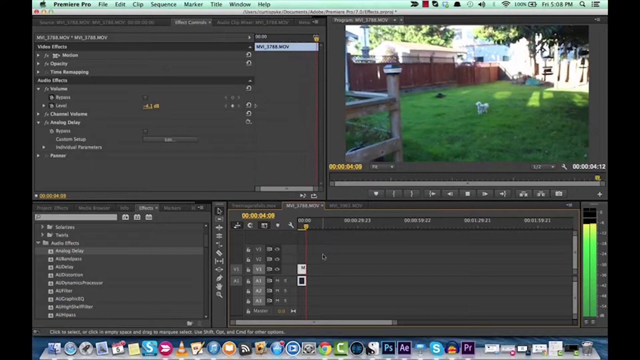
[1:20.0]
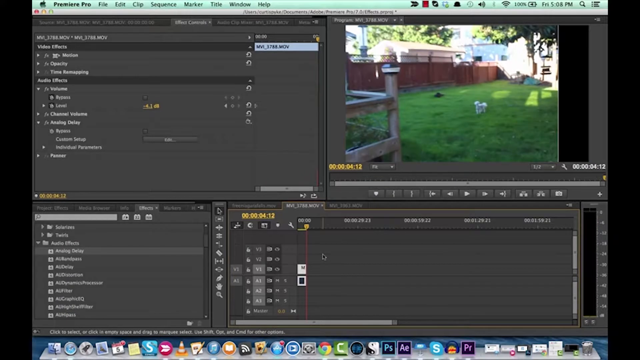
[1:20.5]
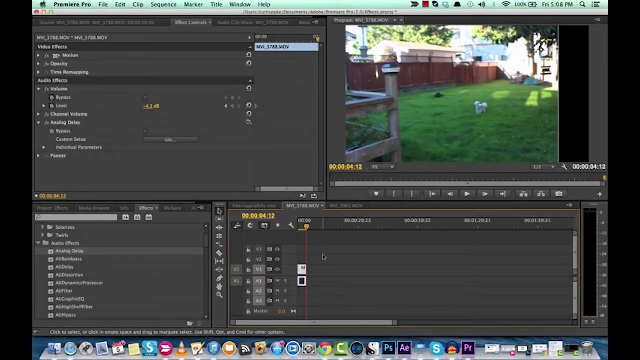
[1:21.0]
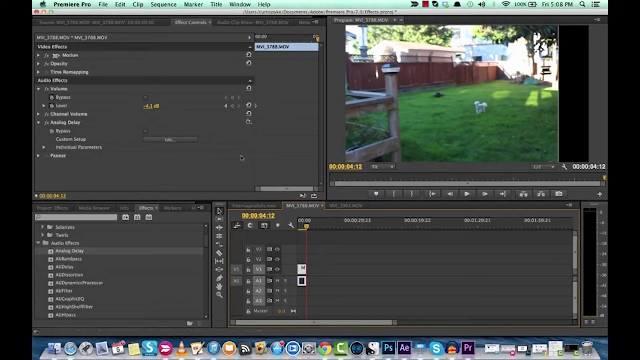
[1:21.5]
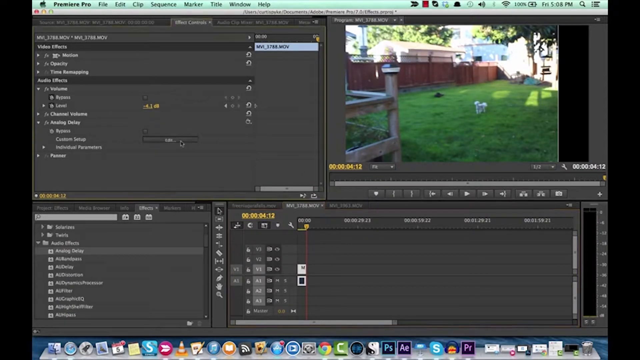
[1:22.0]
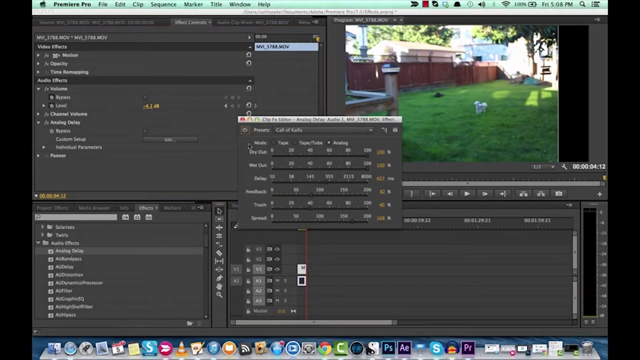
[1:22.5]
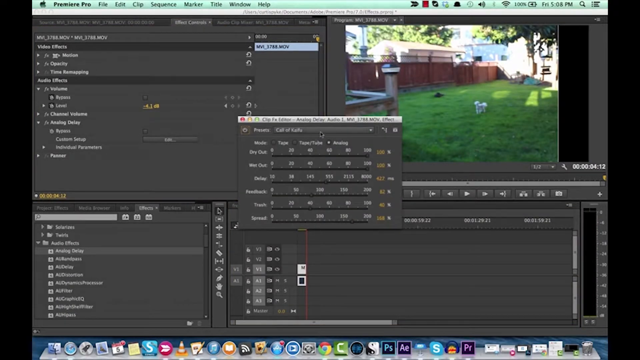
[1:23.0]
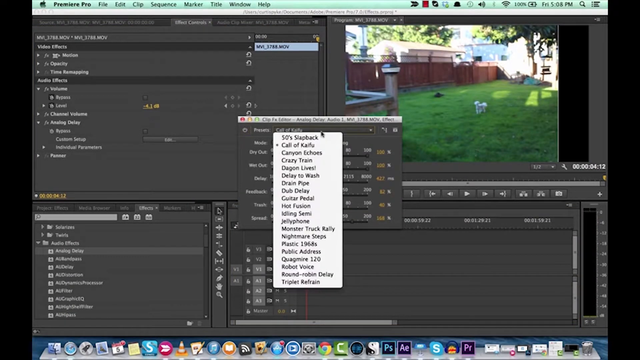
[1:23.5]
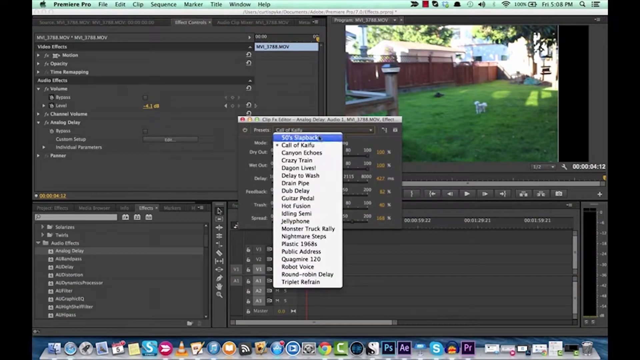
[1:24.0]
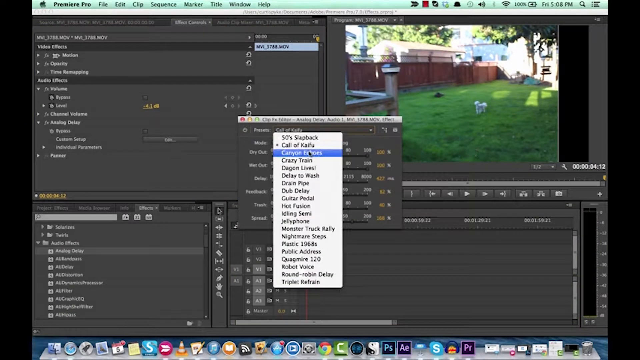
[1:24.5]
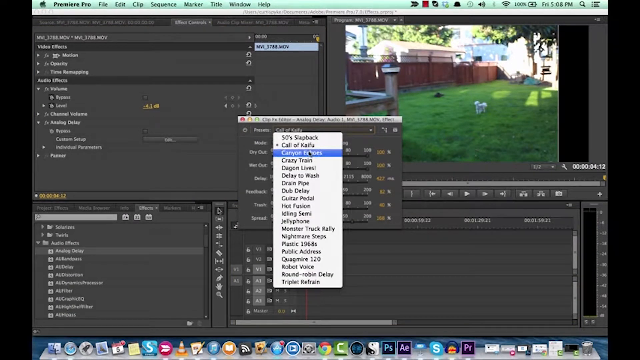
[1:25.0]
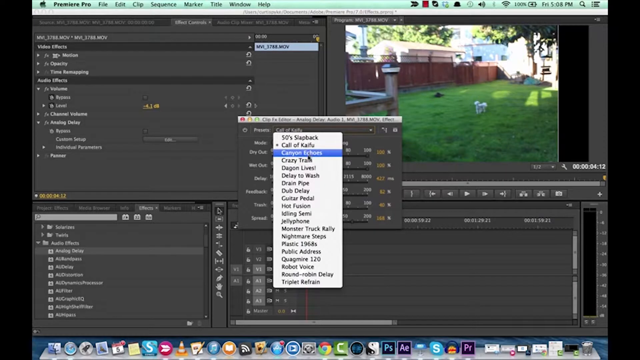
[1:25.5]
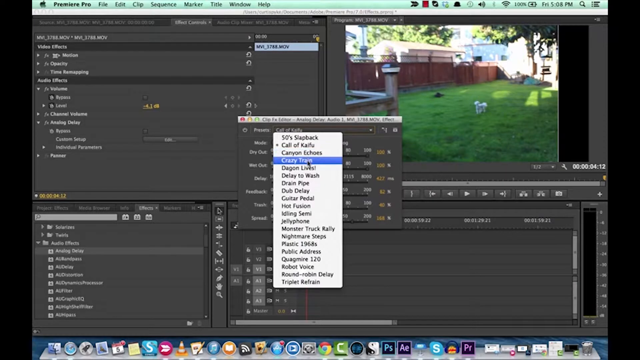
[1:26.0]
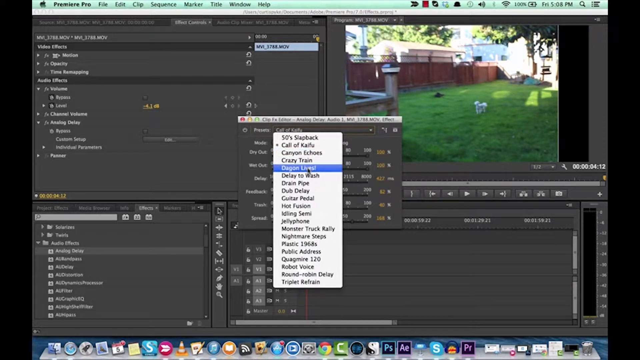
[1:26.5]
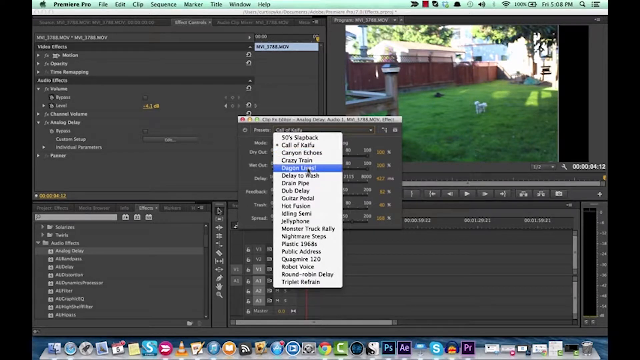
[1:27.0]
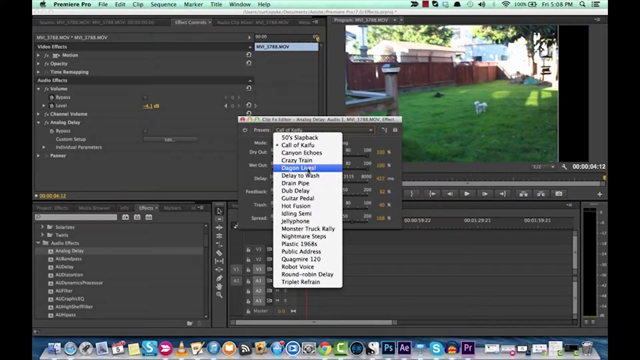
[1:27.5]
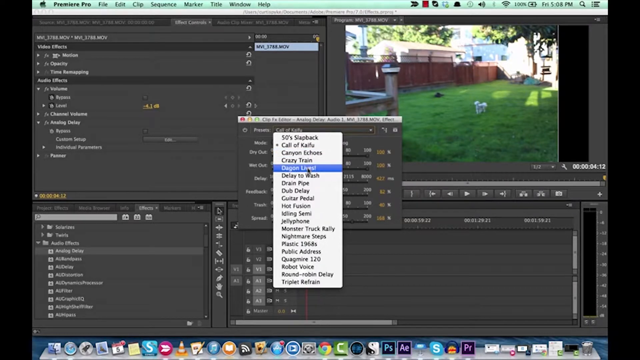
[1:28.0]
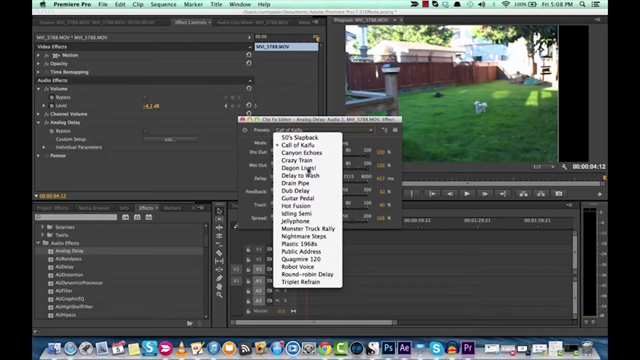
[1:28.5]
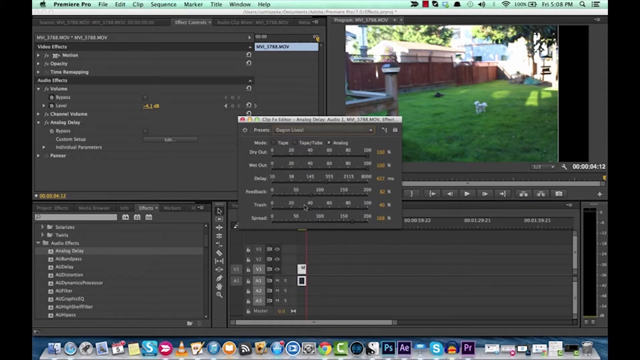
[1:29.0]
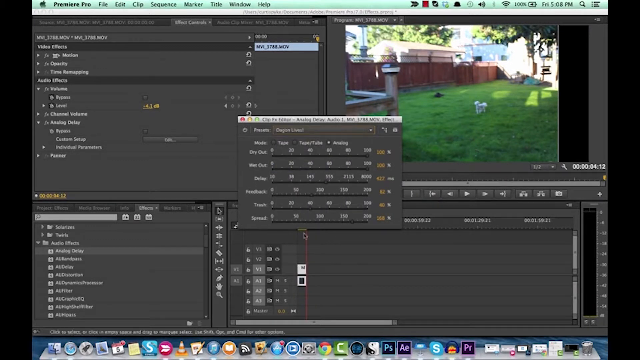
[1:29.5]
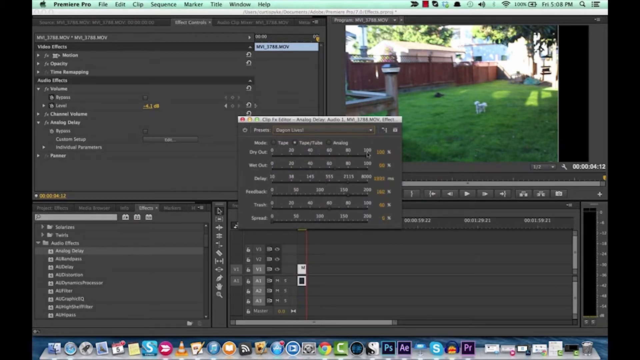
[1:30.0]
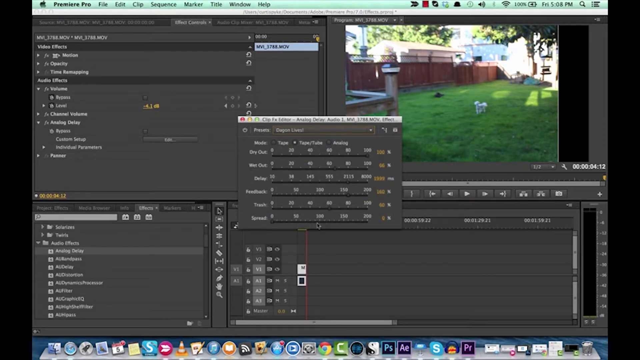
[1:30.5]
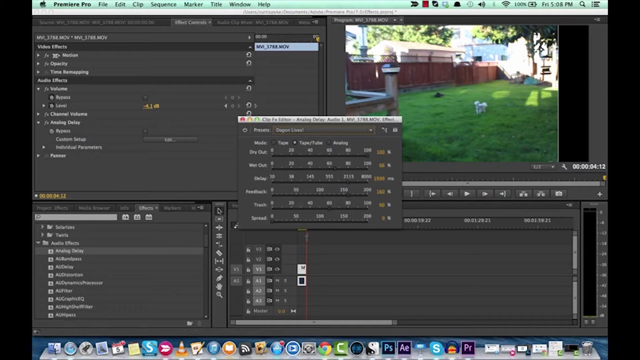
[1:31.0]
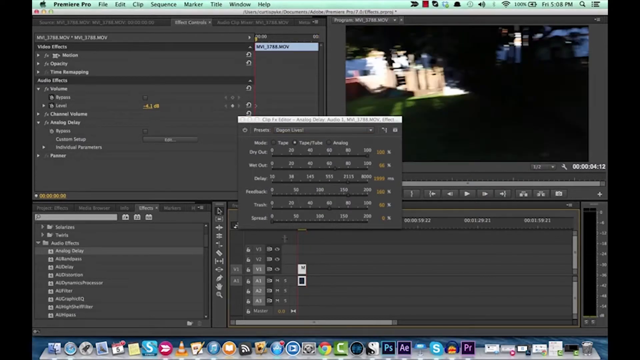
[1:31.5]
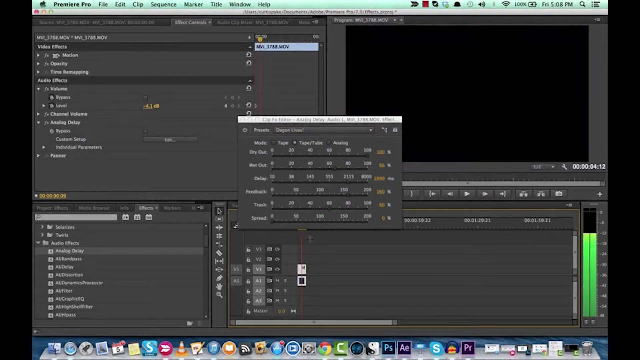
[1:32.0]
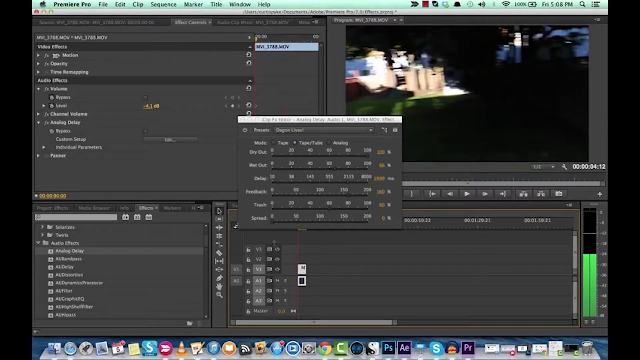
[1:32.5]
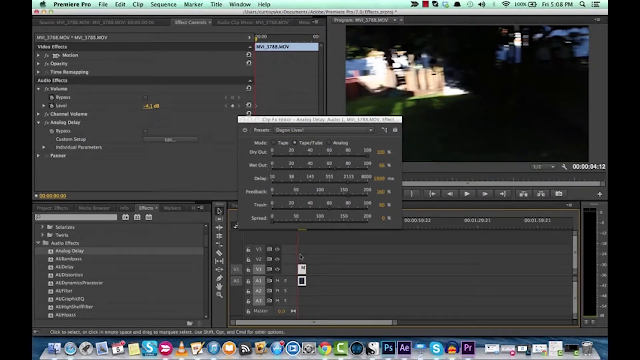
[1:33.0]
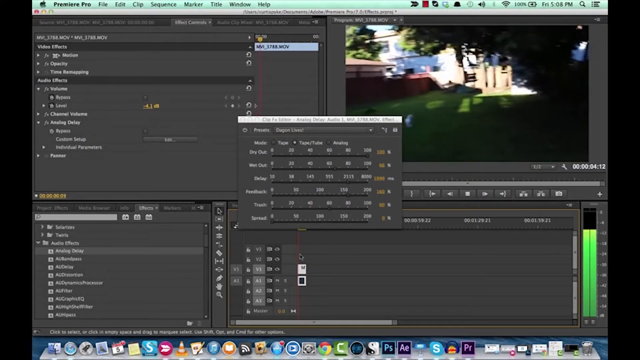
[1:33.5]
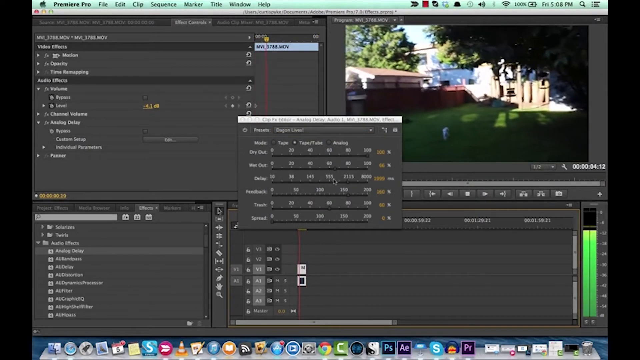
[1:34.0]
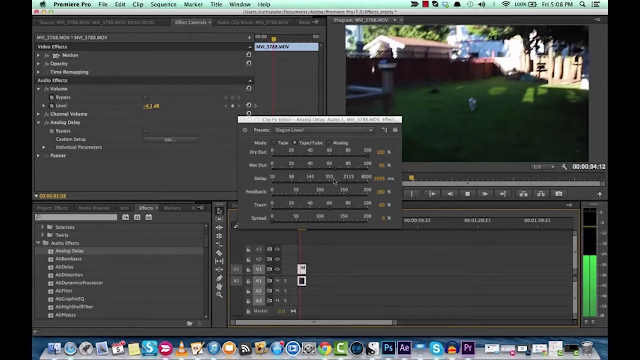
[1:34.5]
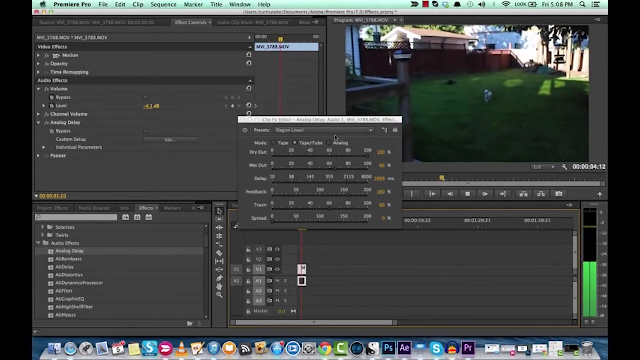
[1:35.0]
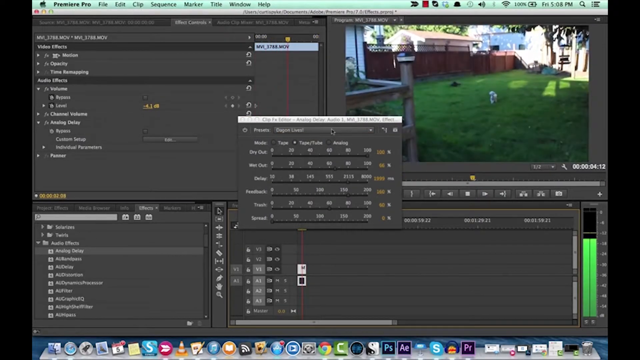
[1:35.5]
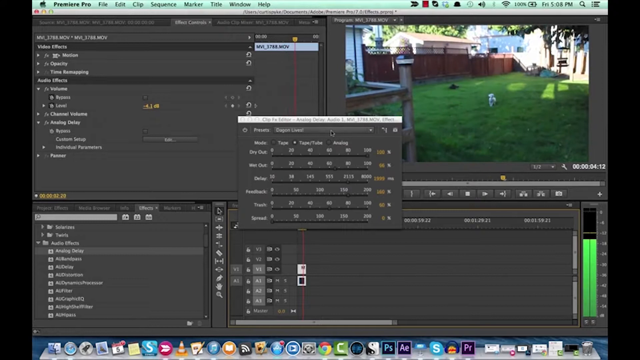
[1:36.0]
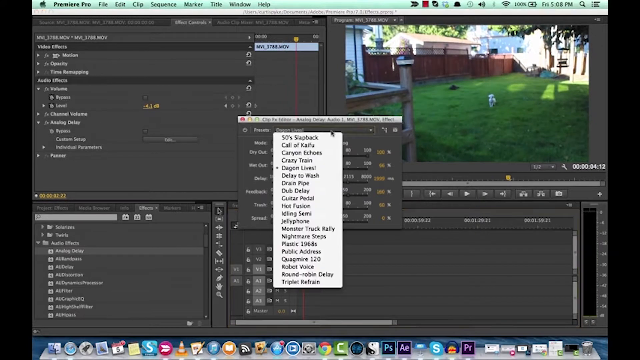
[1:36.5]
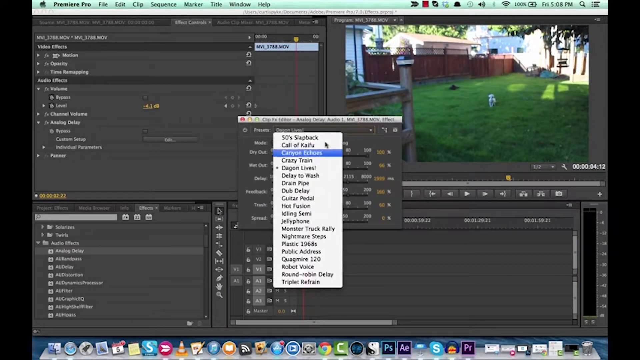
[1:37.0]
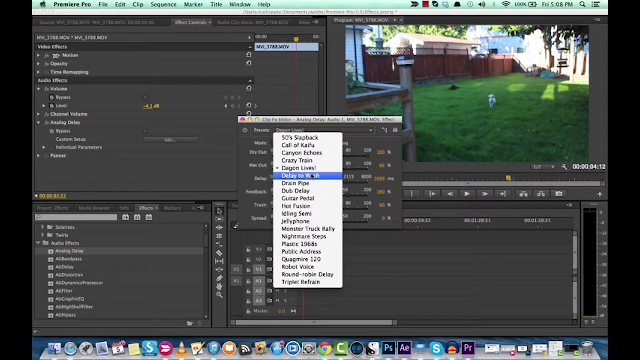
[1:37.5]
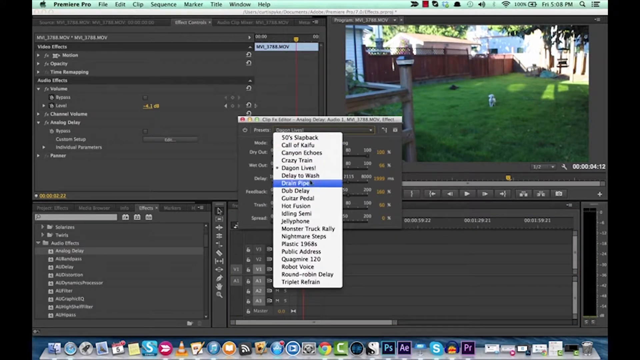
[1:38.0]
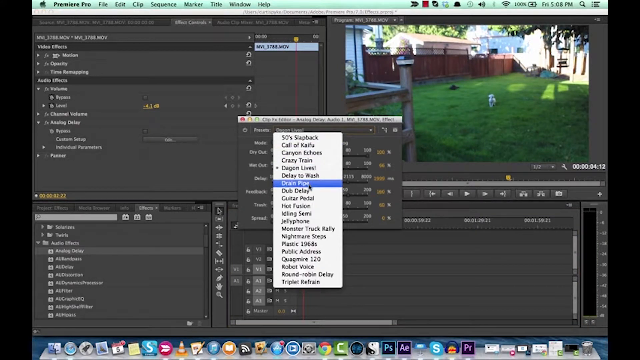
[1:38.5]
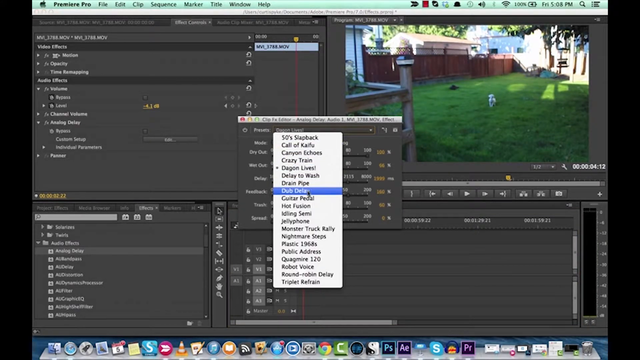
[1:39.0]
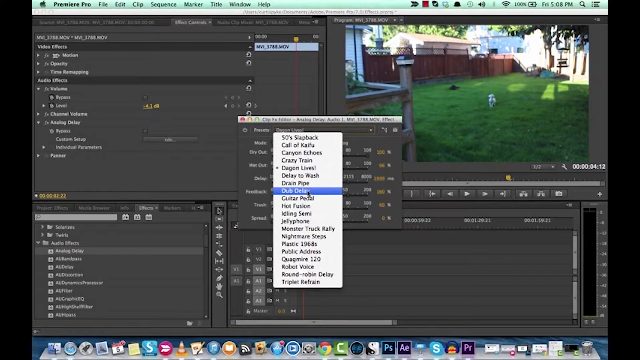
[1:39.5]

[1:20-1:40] The user goes to the left side of the screen, to an Audio Selection area, apparently doing some form of audio editing. They go to an Edit button, which appears to be under Audio Effects, and a pop-up opens in the center of the screen, apparently titled "ClipFX Events Explorer". They play through the clip and go through presets; they are on DragonLibs and then move on to select another preset. The user hovers over the area below the effects and adjusts the preview clip of the footage, moving it around while seemingly selecting new effects and trying out the different presets. They restart the clip by clicking beneath the event section on what appears to be the timeline and clicking backwards, restarting the footage in the preview window in the top right-hand corner of the screen. The preview video takes up only part of the screen, with blank space on its right-hand side; once an effect is applied, this changes instantly, possibly because an effect had altered the aspect ratio.